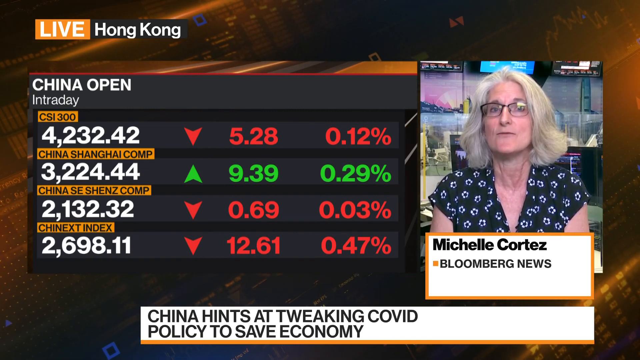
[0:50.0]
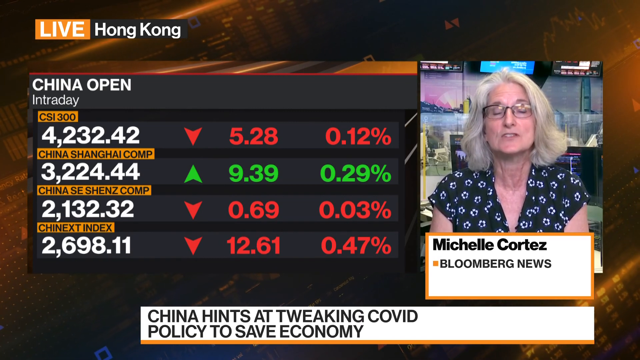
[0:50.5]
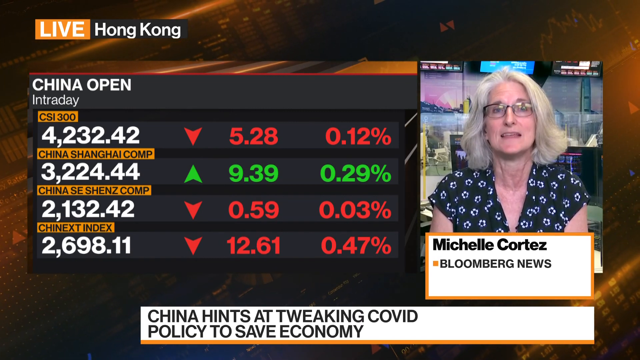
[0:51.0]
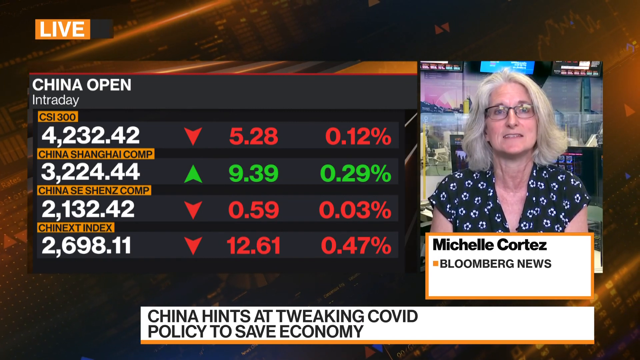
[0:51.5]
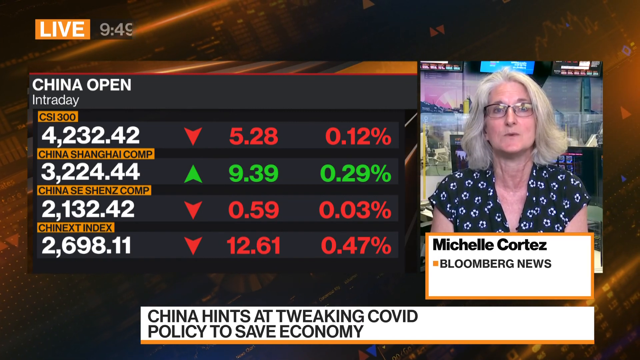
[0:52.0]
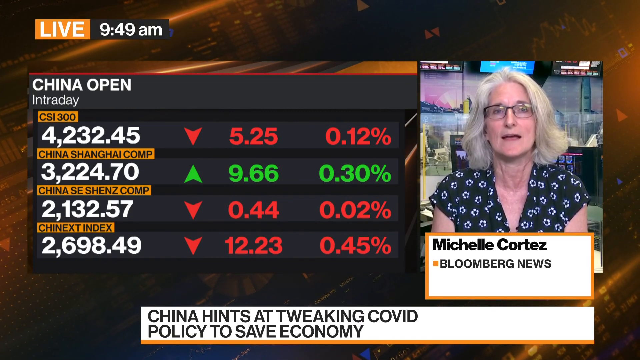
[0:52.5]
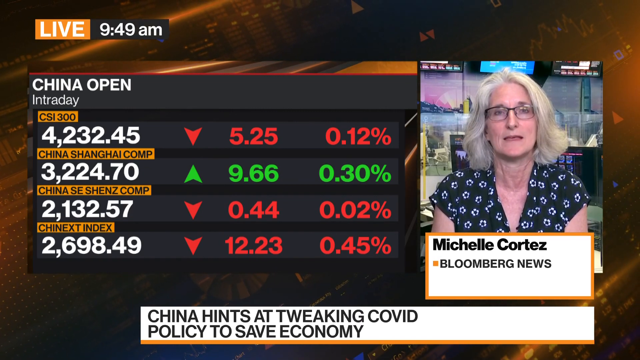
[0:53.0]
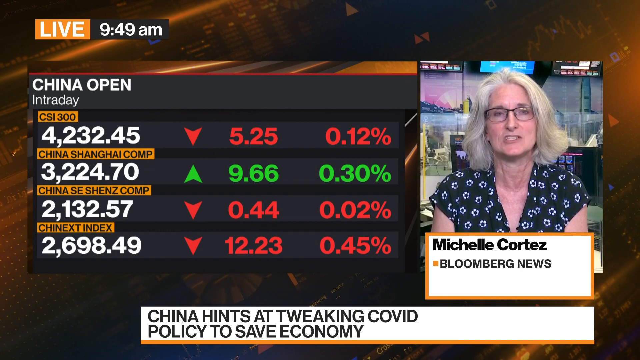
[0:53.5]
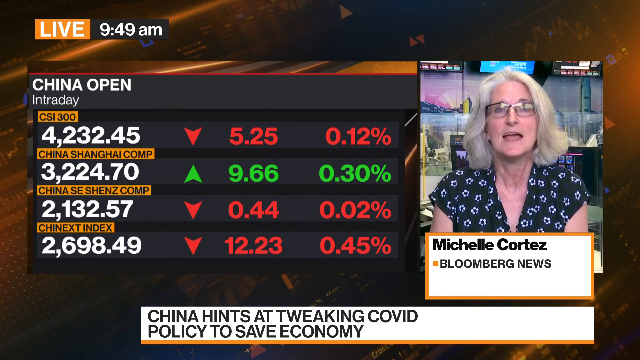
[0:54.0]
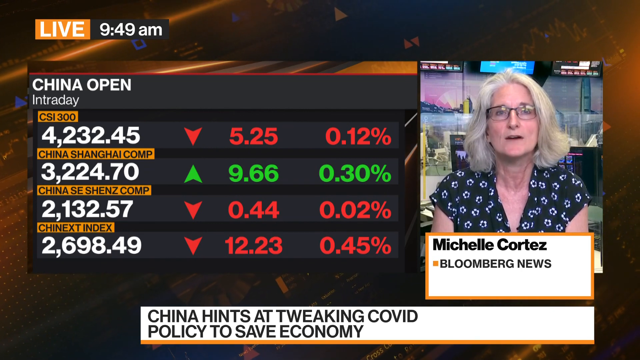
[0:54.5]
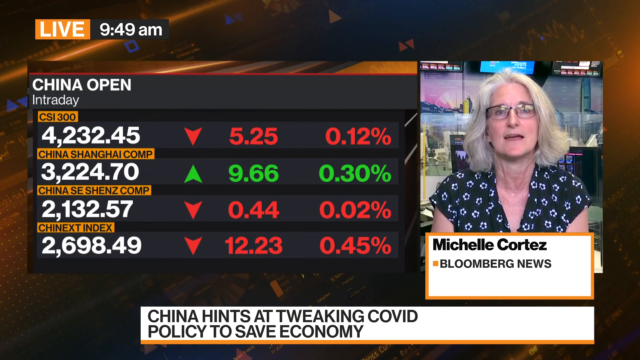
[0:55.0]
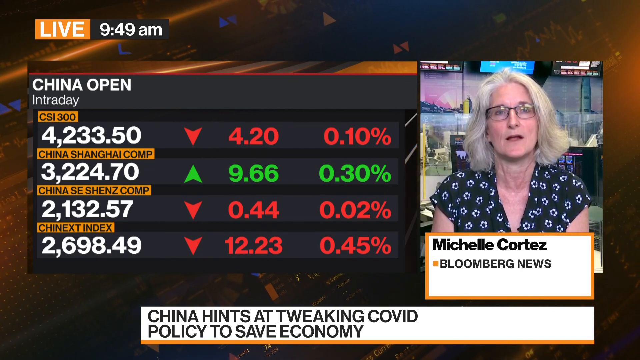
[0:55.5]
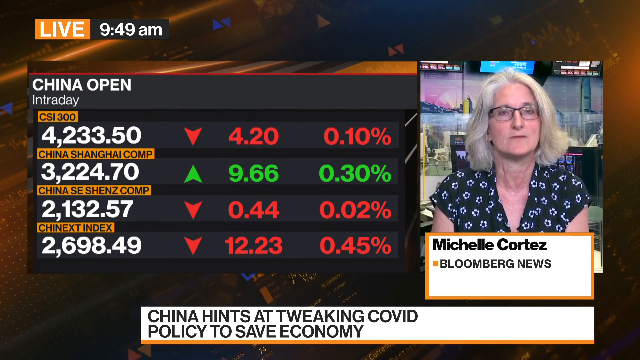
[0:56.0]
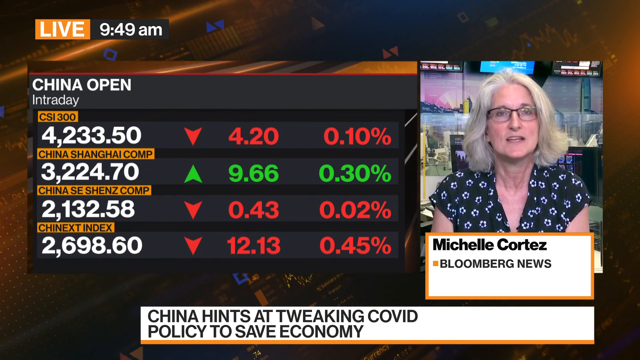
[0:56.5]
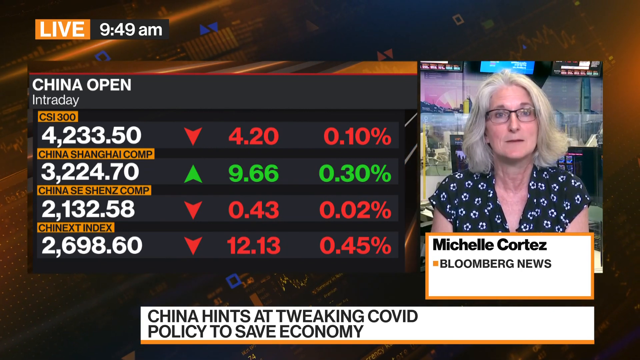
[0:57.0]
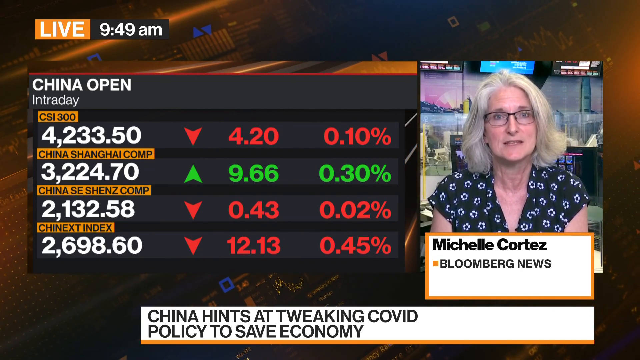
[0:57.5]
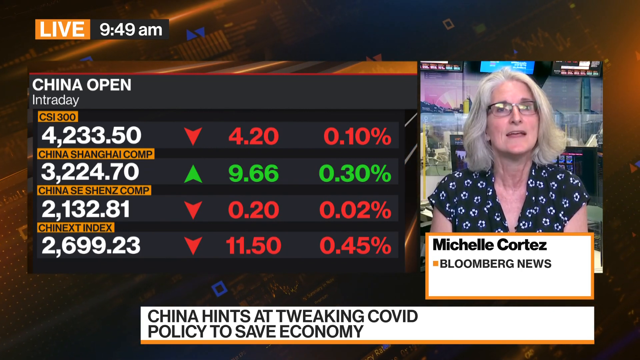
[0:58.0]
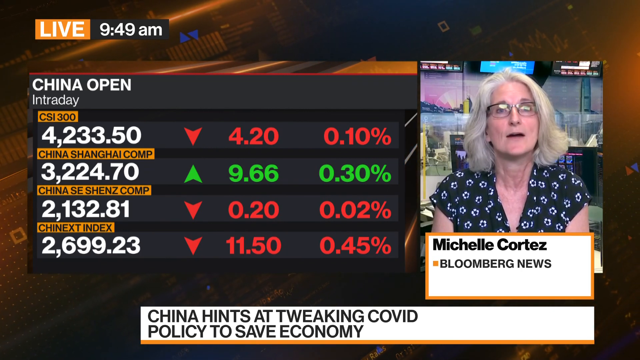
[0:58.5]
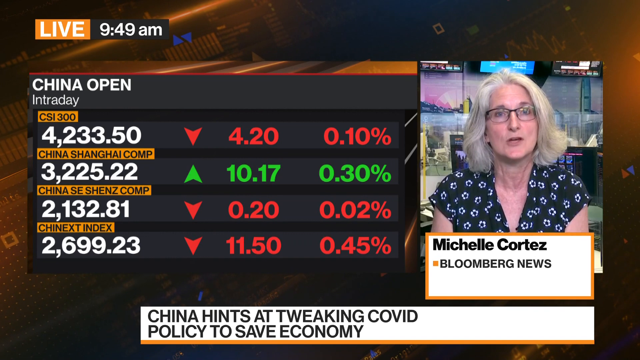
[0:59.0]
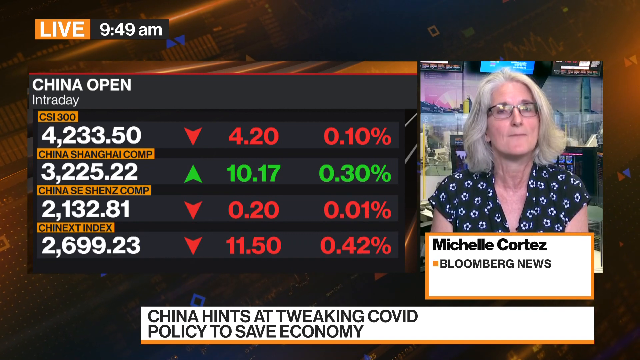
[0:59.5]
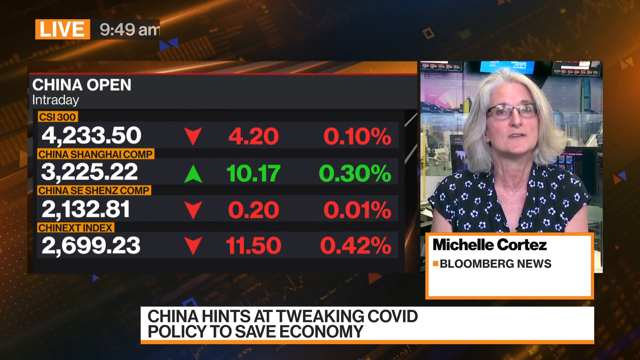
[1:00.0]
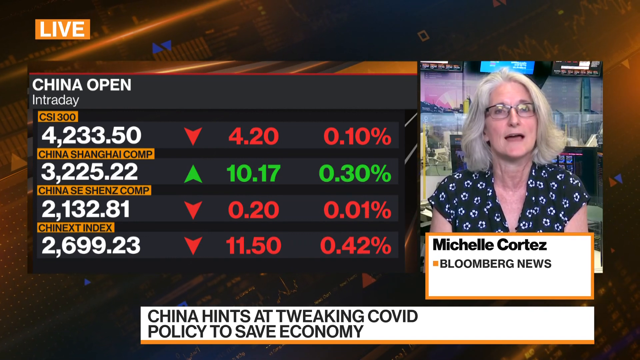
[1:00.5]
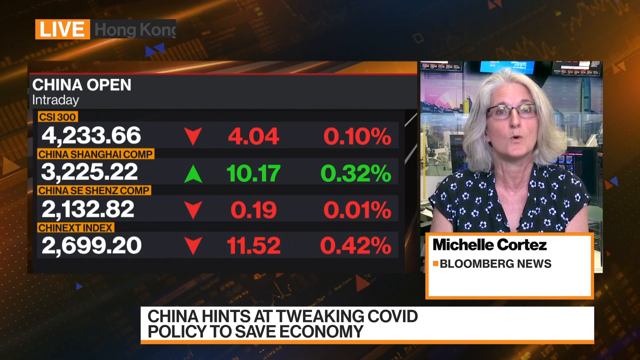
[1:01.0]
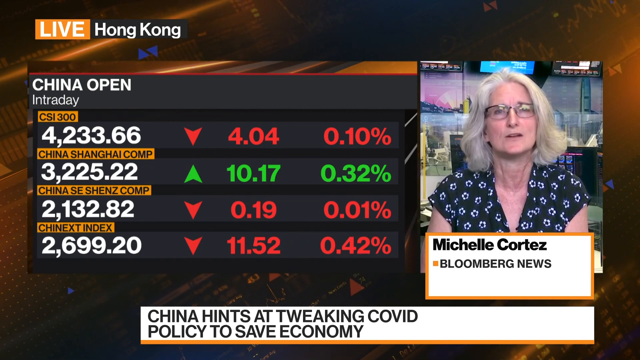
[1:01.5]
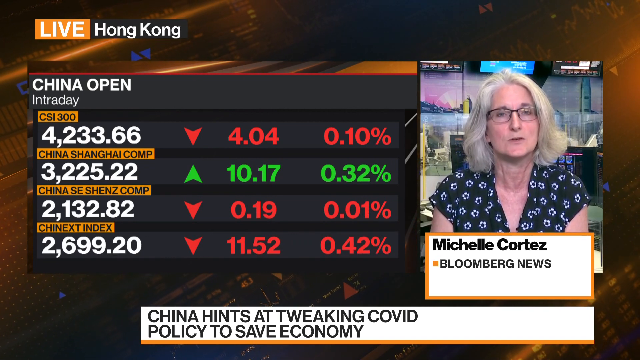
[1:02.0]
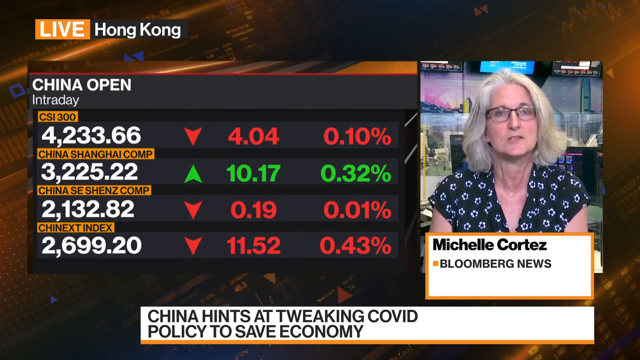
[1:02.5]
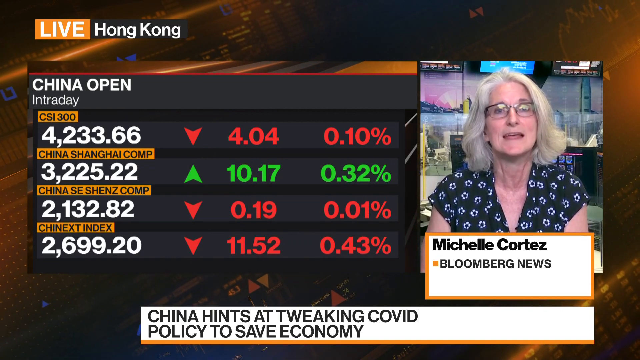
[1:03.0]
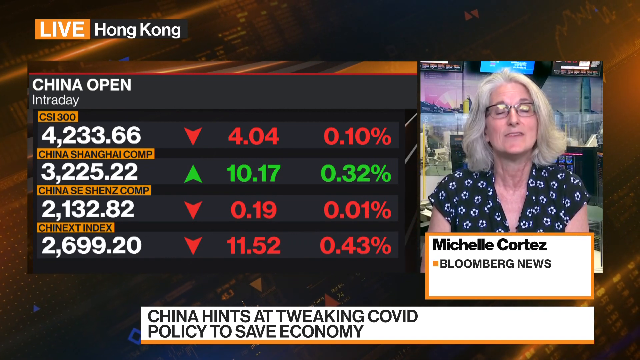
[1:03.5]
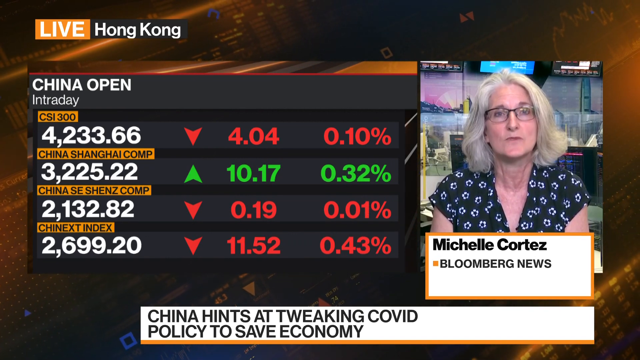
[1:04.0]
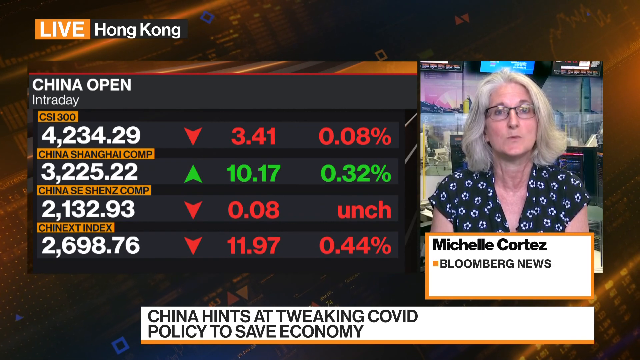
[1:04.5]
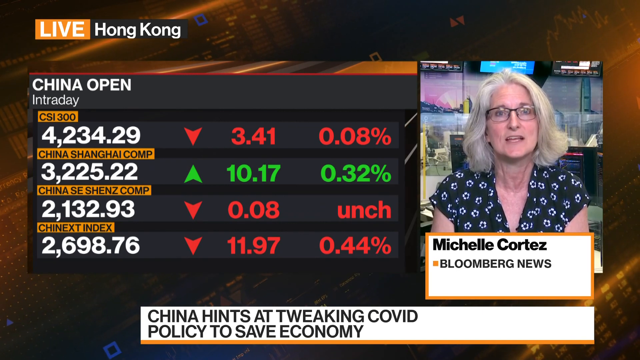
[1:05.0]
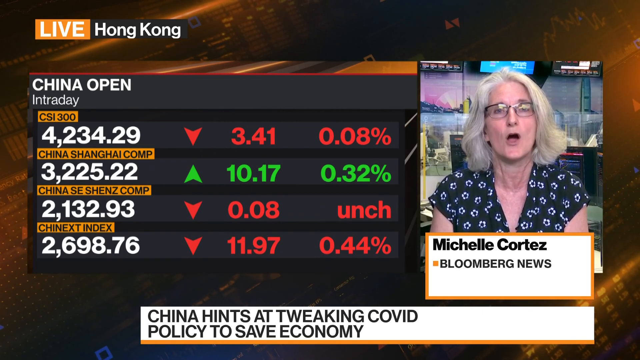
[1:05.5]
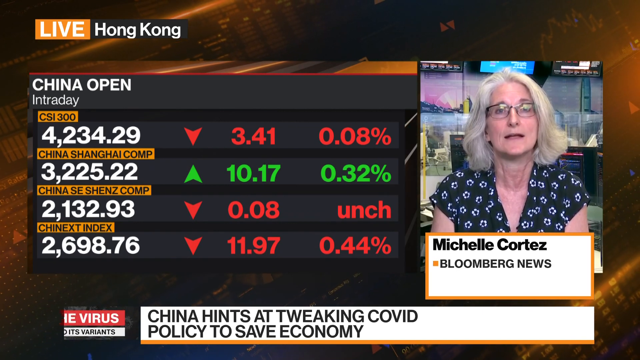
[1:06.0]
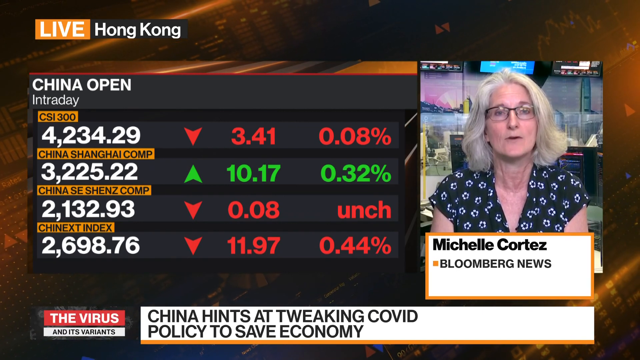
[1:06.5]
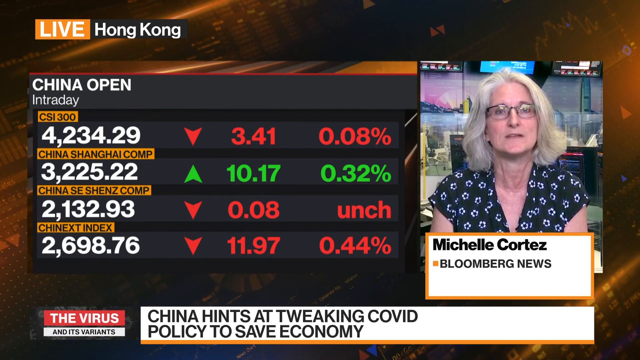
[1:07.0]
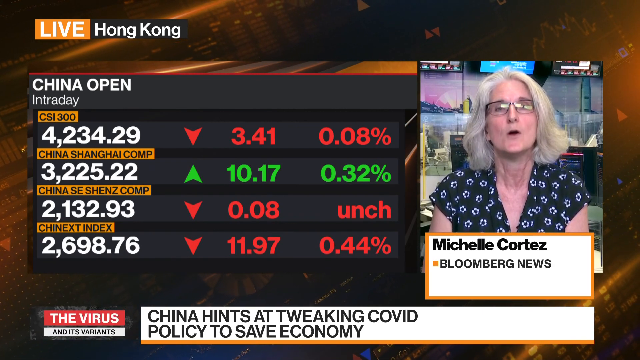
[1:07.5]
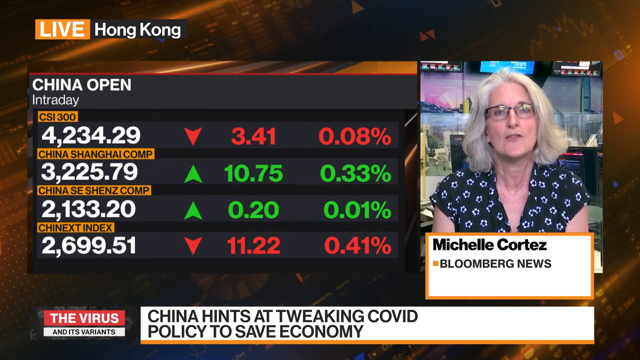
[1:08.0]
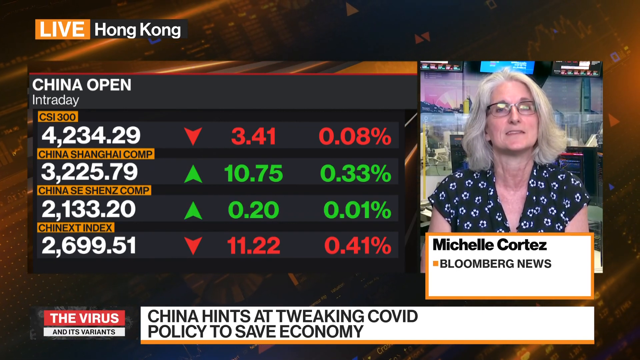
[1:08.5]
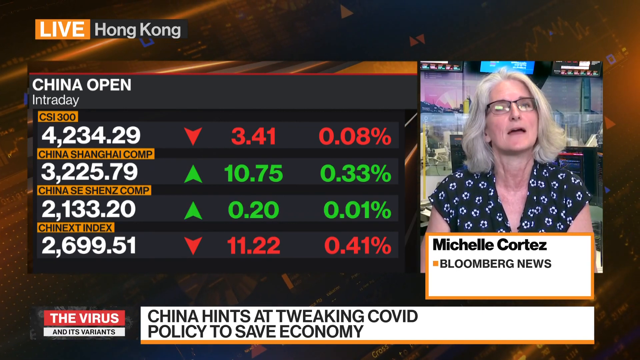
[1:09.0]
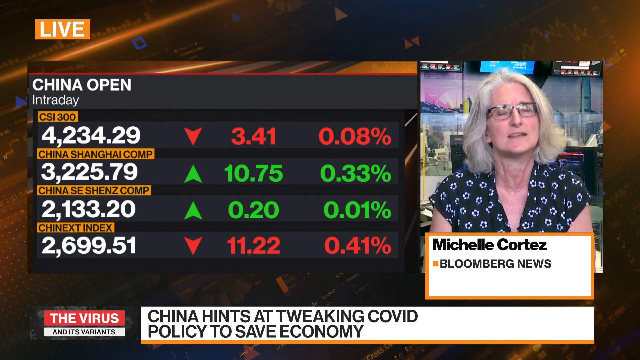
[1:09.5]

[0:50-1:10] Michelle Cortez speaks directly to the camera in front of her, sitting in a newsroom. Underneath her name it reads "Bloomberg News." The top left of the screen reads "live 9.49 a.m.," and underneath that label is information for China's stock market. At the bottom of the screen, a banner reads "China hints at tweaking COVID policy to save economy." Michelle continues to speak to the camera, showing a lot of expressions on her face. The China stock market information keeps changing to show updated figures. It is not clear whether she is speaking to another news host or directly to viewers.